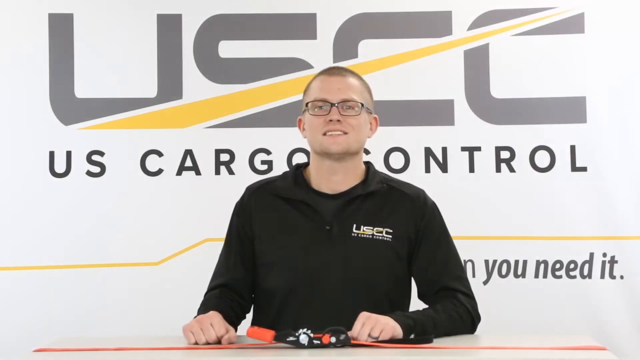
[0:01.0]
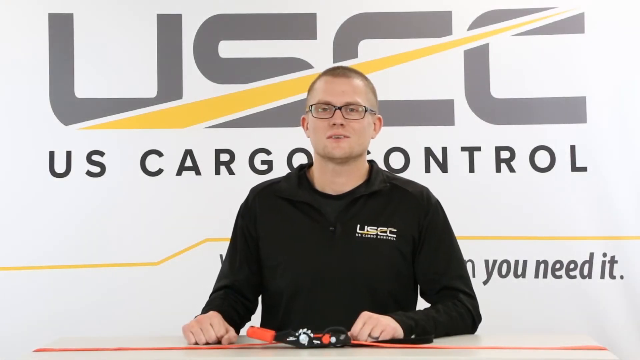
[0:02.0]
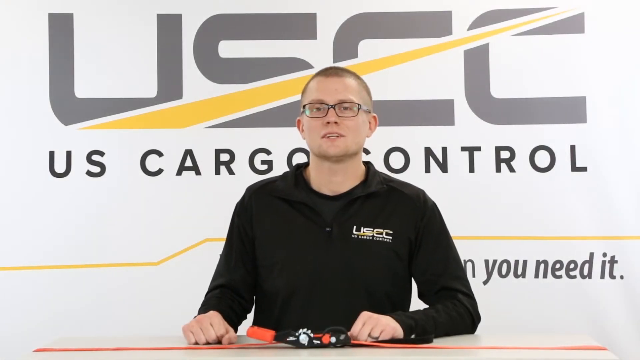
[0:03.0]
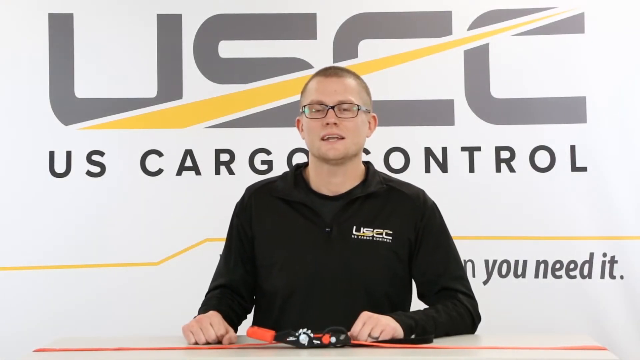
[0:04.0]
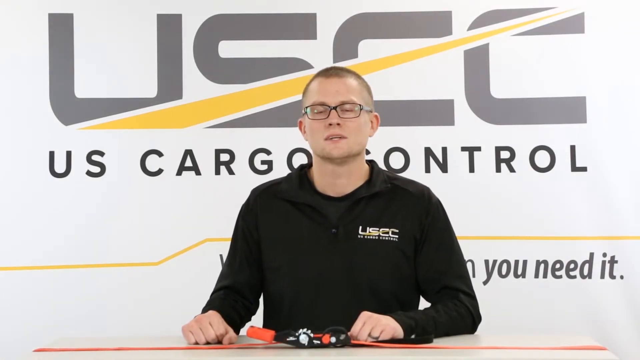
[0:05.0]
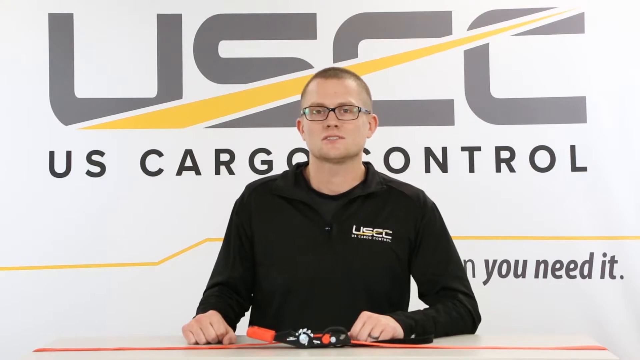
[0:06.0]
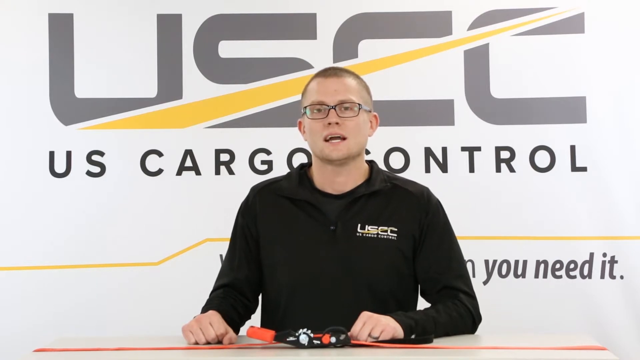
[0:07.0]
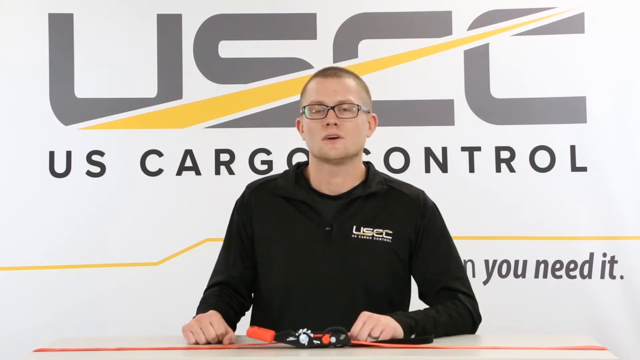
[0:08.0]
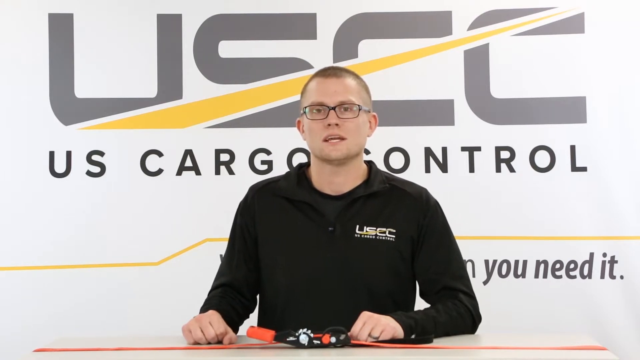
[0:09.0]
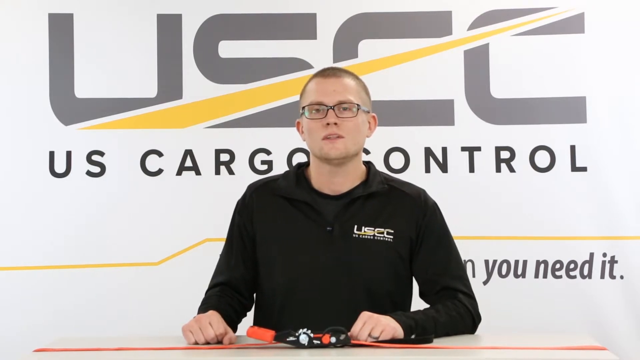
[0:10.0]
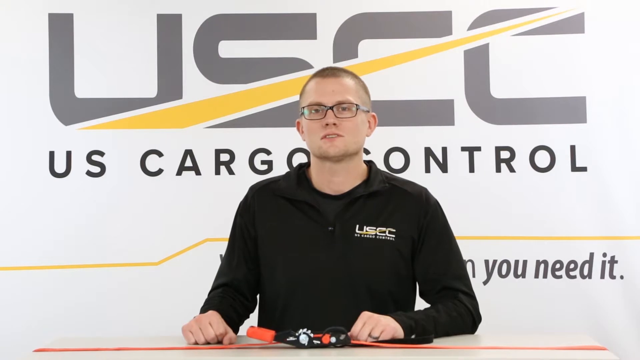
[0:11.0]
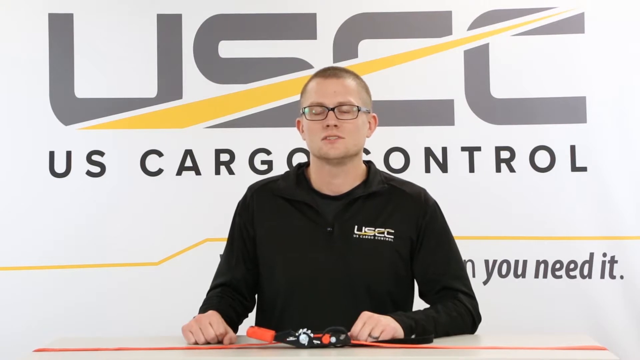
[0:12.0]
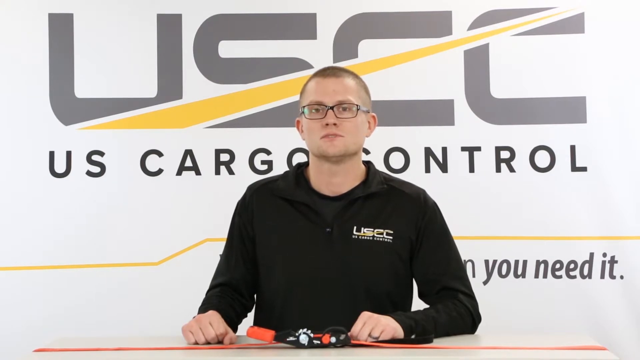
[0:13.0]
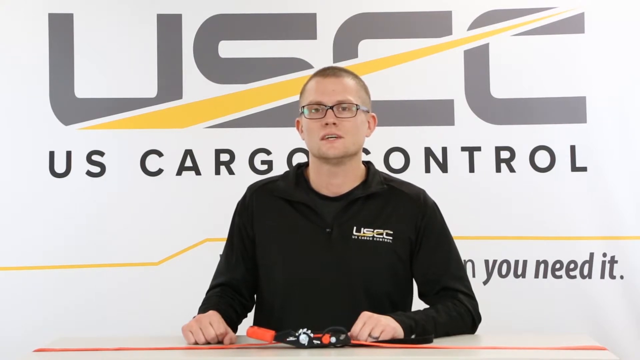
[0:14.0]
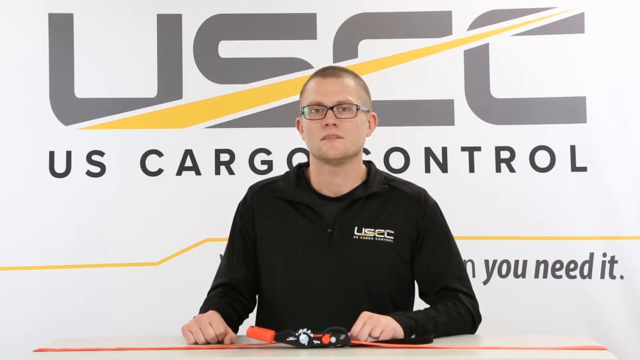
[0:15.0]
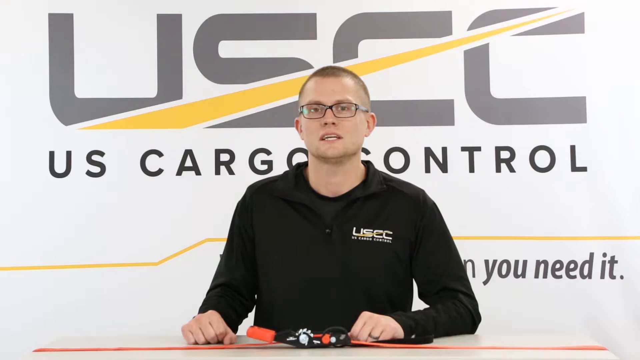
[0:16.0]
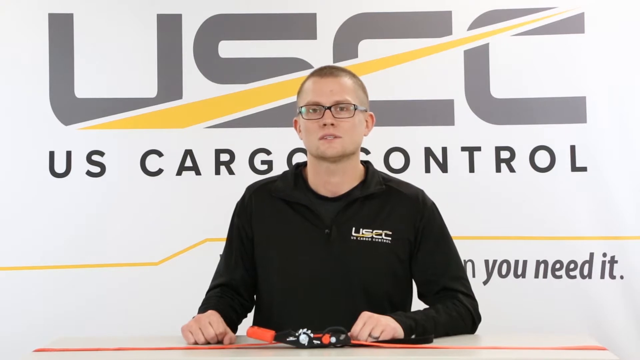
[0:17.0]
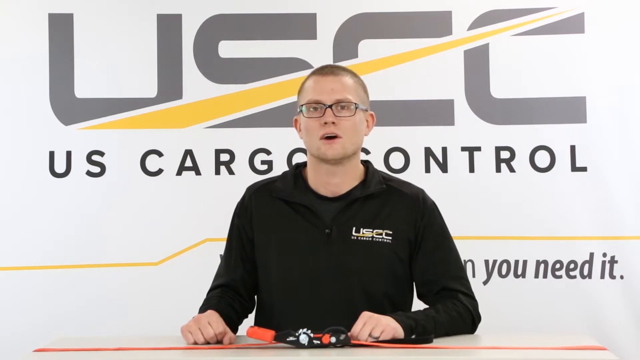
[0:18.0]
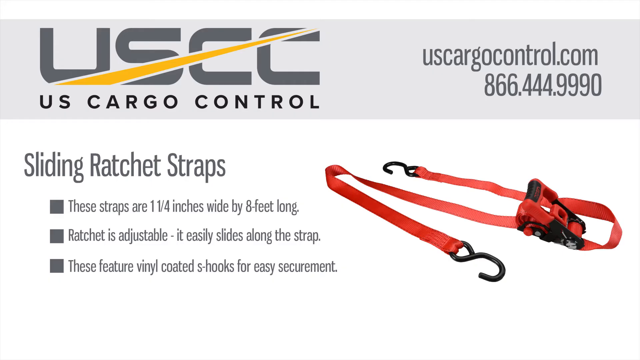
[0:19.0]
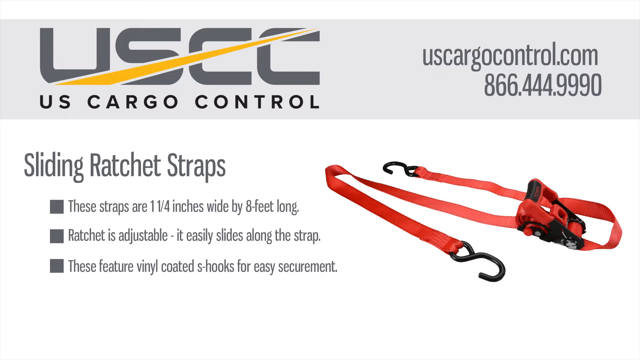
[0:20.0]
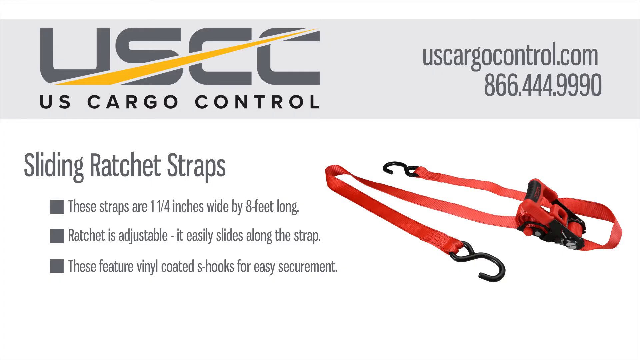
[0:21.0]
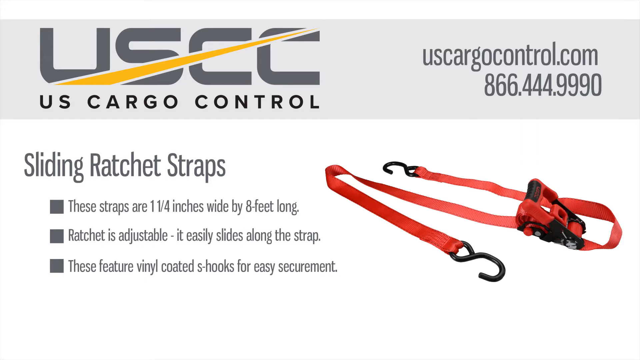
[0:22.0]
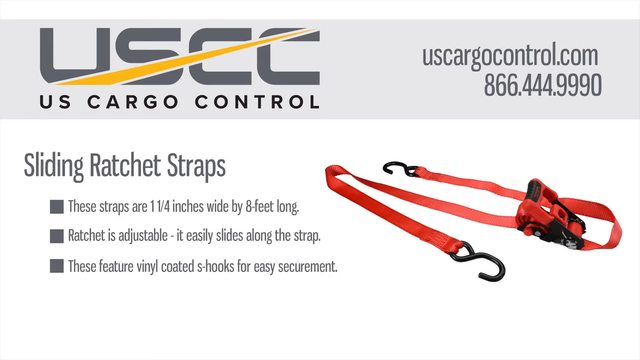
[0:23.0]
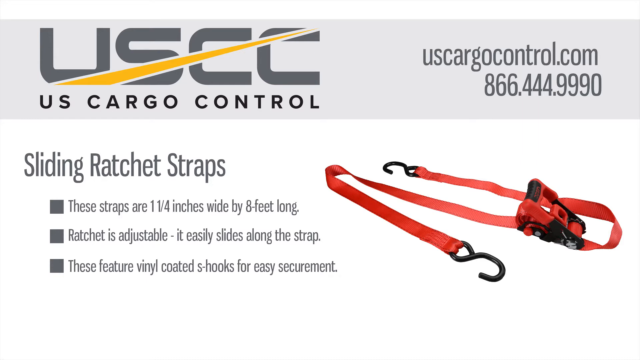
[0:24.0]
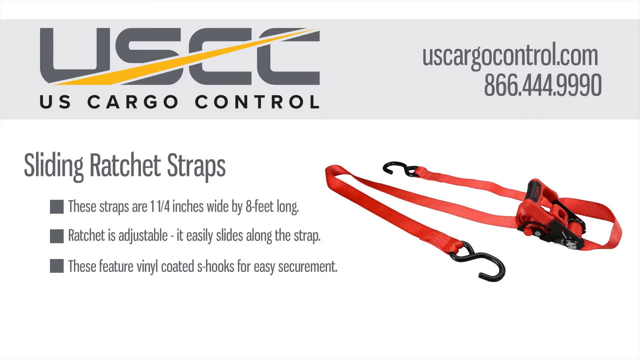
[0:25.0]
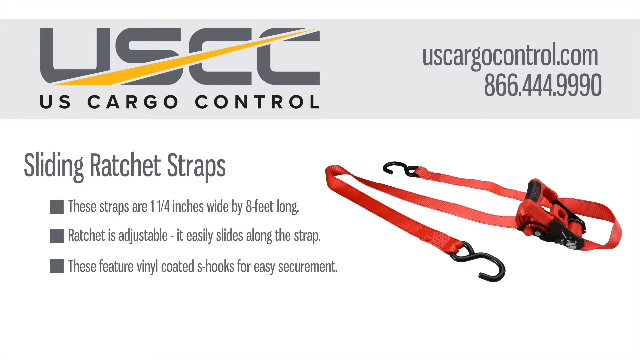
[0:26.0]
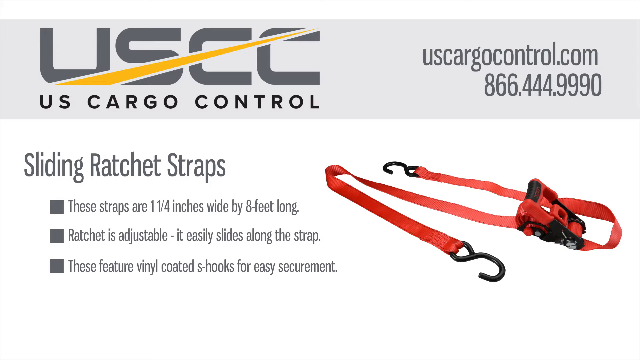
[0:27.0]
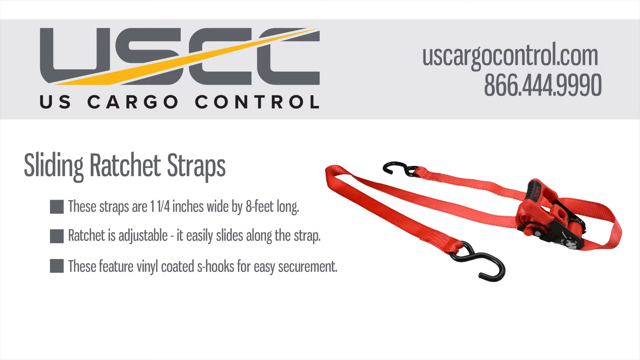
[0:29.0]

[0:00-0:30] The video slowly fades from a white screen to a man speaking behind a desk. He wears black-rimmed glasses and a black long-sleeve pullover with a zipper in the front, with a black shirt underneath. On the left side of his chest is a white USCC logo. The same logo is on the wall behind him: it says "USCC" with a diagonal yellow line going into the middle of it from the bottom left to the top right, starting thick and getting thinner as it goes up, and underneath it says "US cargo control". On the desk in front of him there appears to be a strap with a black buckle and some orange color. The next screen has the USCC logo in the top left and says "sliding ratchets straps", with three square bullet points of information about the straps and a picture of the strap on the right. The strap has black hooks at the end and is laid out in roughly a Z shape. Then a close-up of the product is shown.